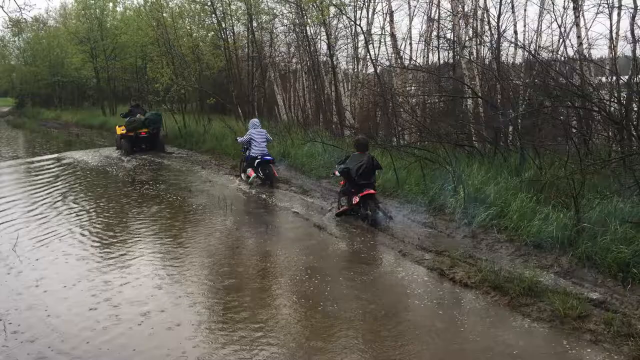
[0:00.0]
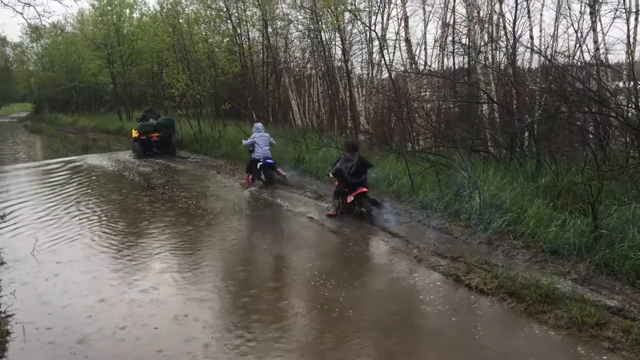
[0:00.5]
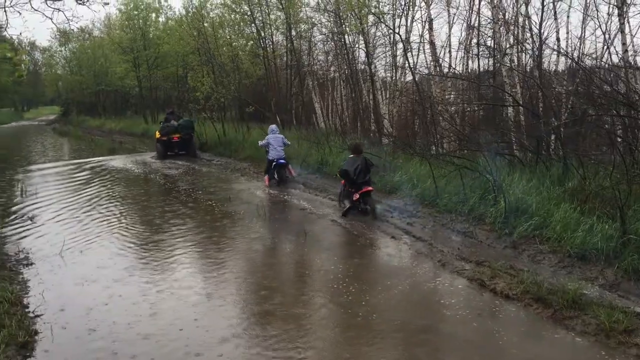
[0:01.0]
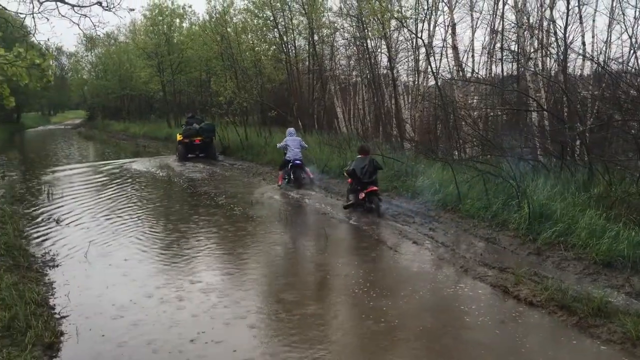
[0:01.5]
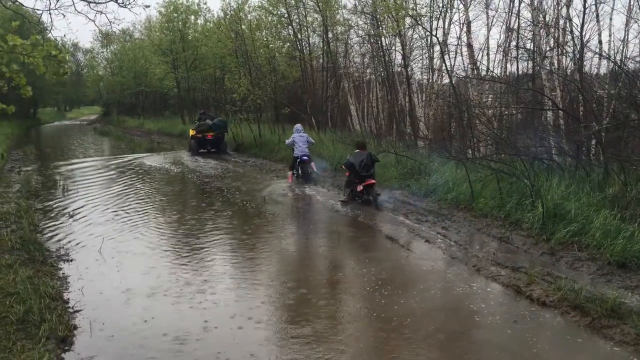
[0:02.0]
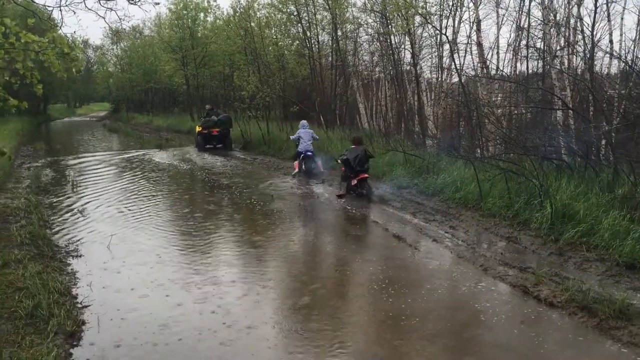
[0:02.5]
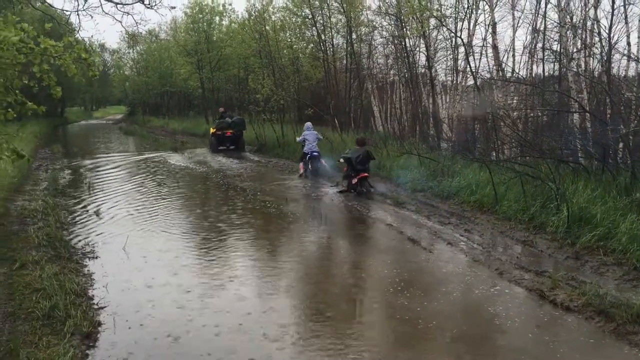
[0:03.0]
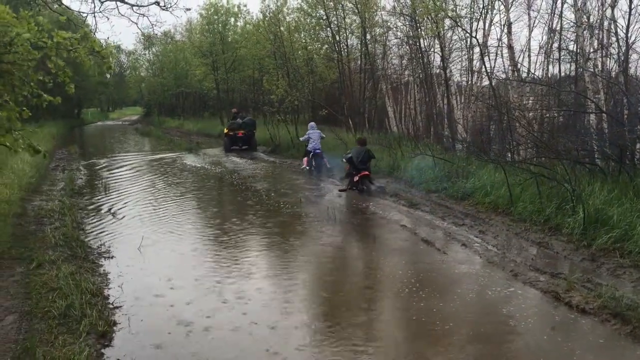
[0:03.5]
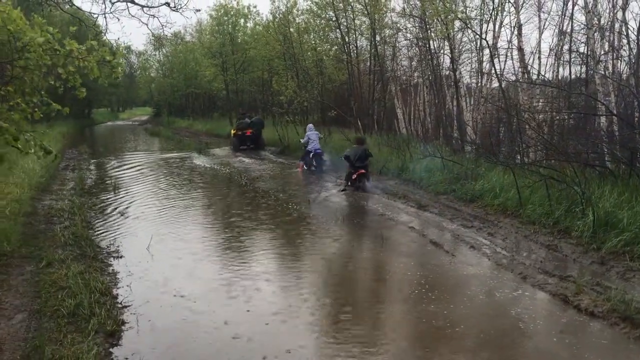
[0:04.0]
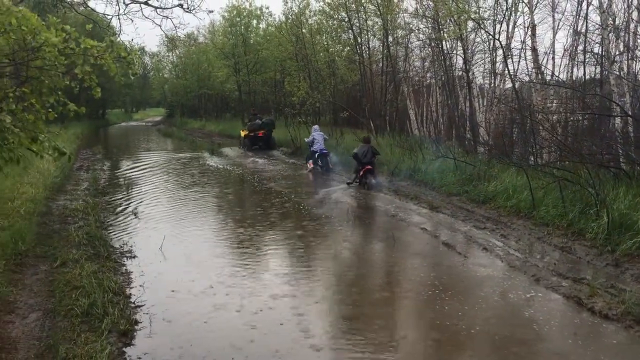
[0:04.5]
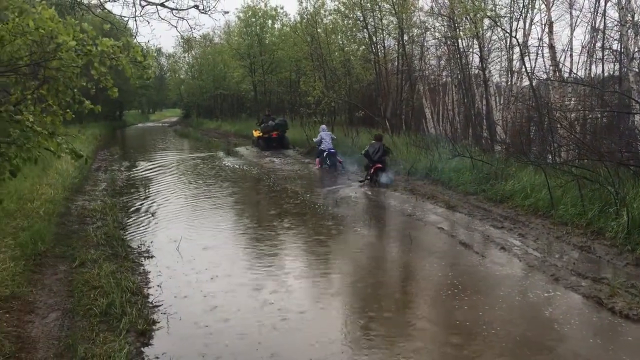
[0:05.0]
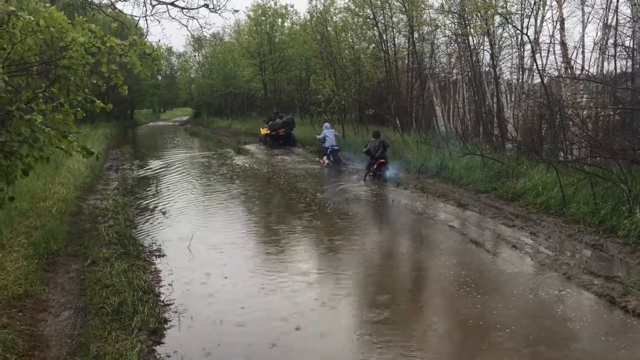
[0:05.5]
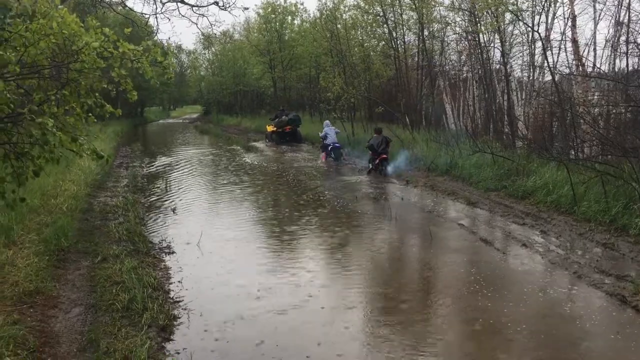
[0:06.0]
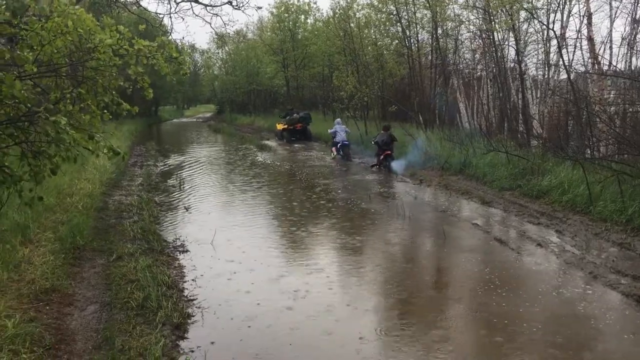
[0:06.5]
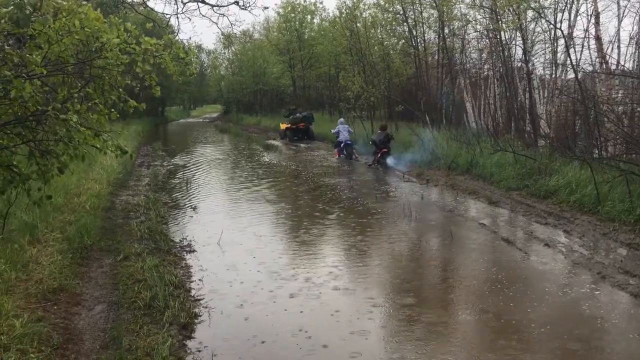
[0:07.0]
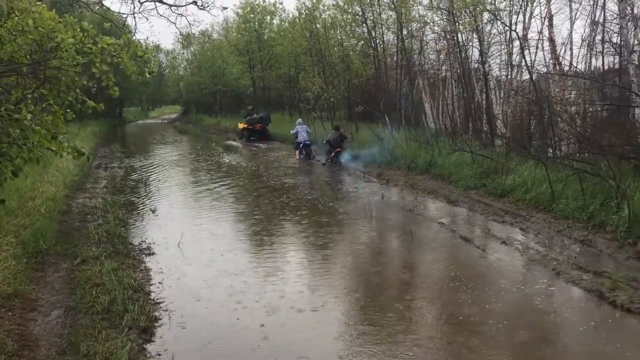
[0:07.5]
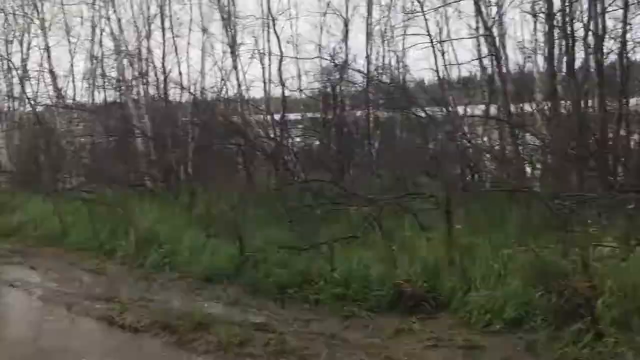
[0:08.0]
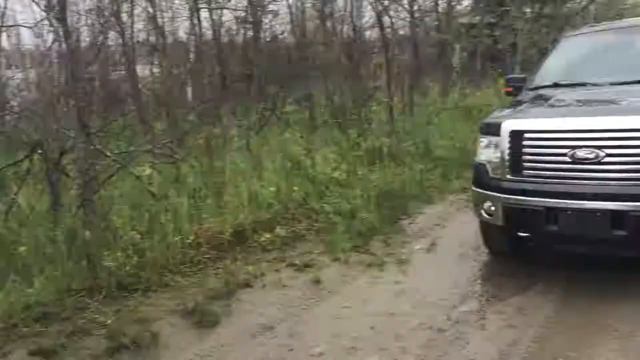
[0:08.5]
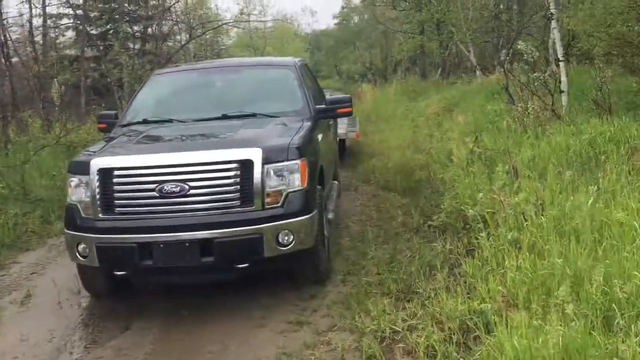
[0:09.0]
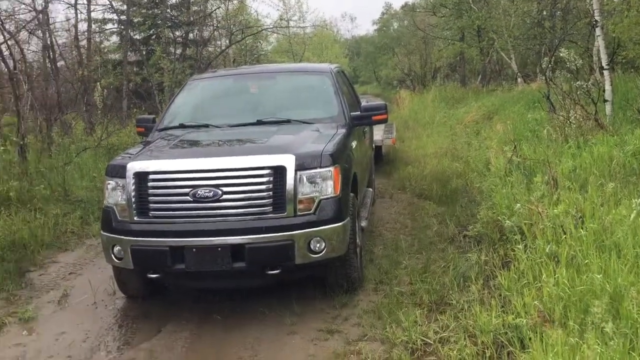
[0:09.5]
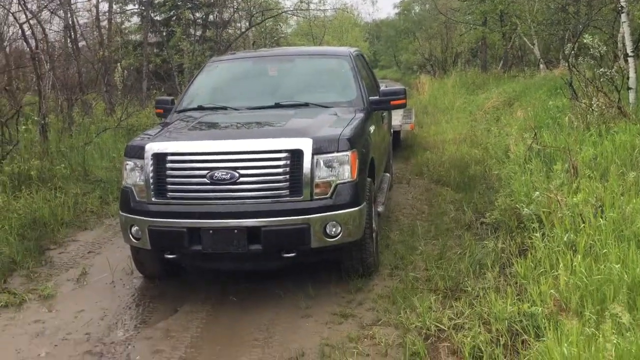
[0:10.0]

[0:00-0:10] A group of men appears to be riding motorcycles or motorbikes through the wilderness while a truck is parked, basically watching them. They seem to be driving around the side of water that is blocking their path, kind of using their feet instead of actually driving, since the water is a bit too high. There are trees to the right of them and a bunch of grass, and some of the trees next to them are dead. The men wear hoodies: the front man in black, the back man in black, and the middle man in gray. The sky looks really muddy, cloudy and gross. There are a lot of ripples in the water, most likely from the riders disturbing it as they move around it. It seems to be a flooded road that has basically turned into a lake, blocking travel along the road except for the men nudging their motorbikes around it.